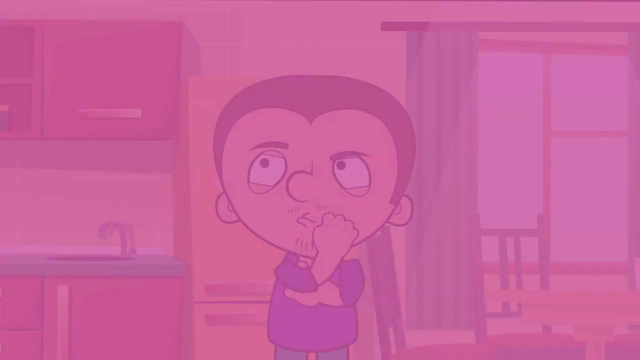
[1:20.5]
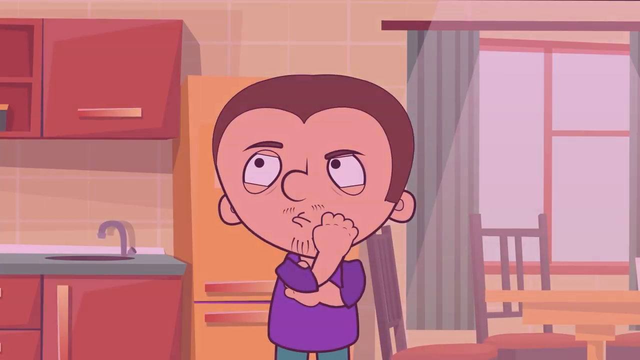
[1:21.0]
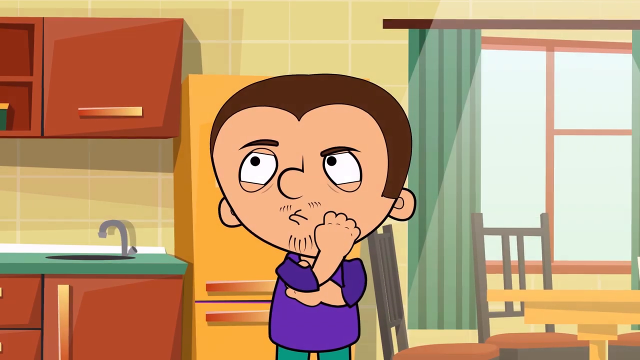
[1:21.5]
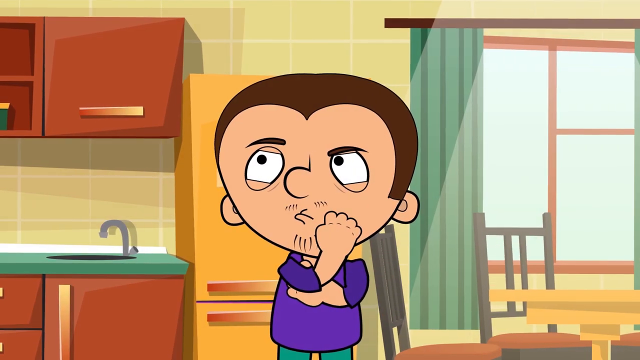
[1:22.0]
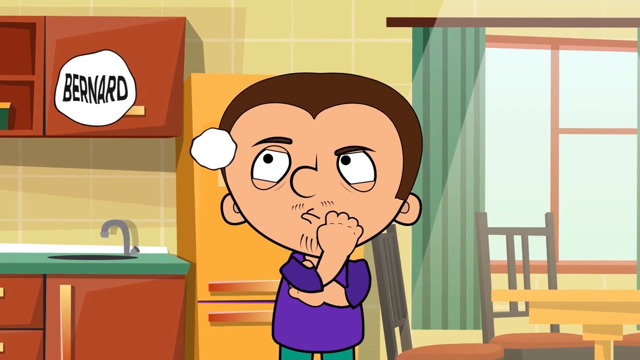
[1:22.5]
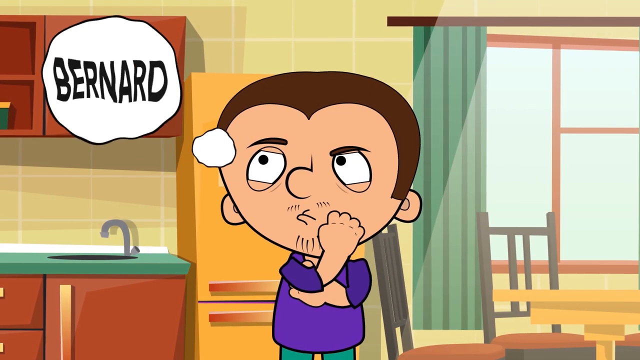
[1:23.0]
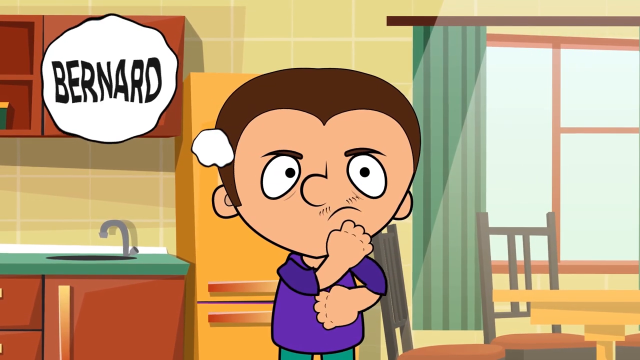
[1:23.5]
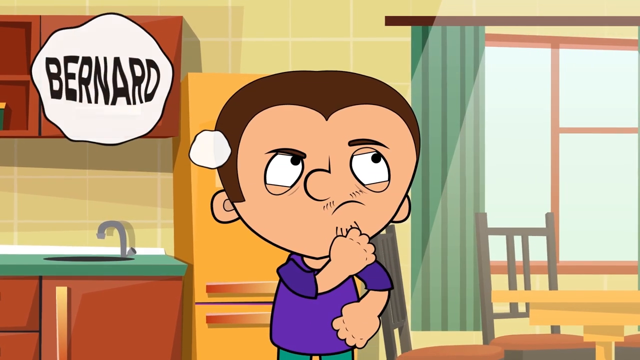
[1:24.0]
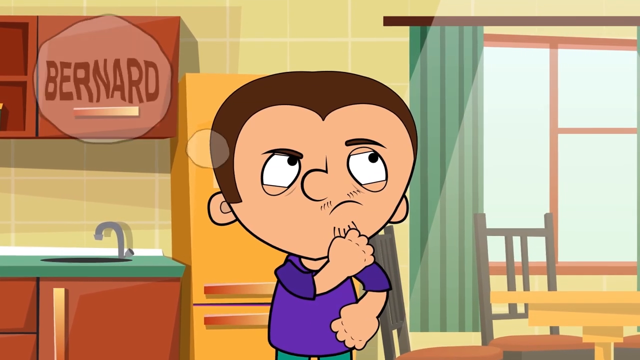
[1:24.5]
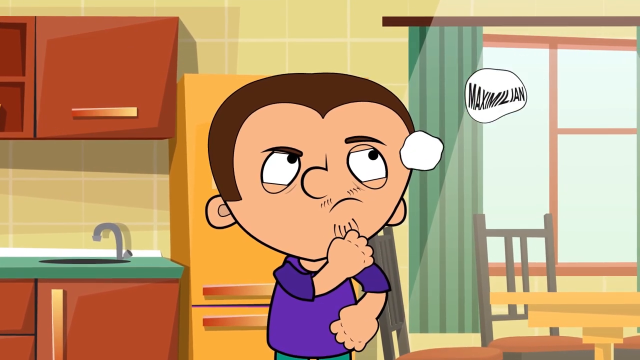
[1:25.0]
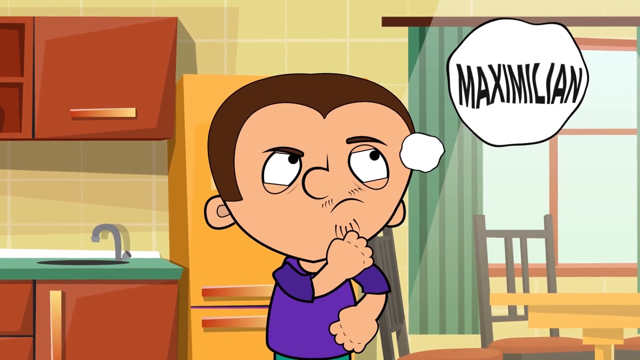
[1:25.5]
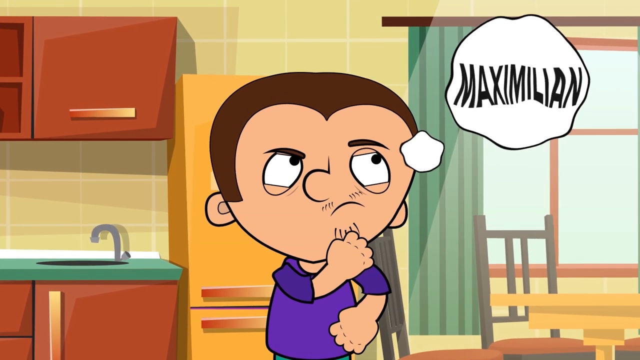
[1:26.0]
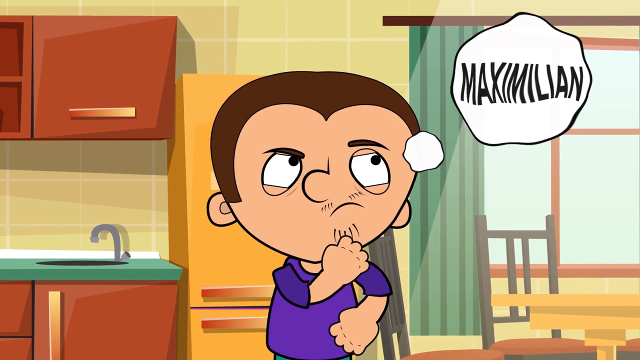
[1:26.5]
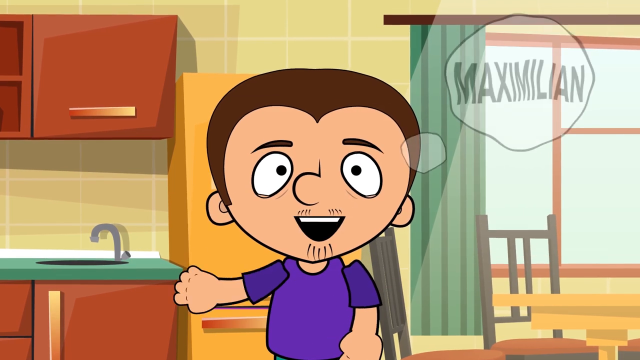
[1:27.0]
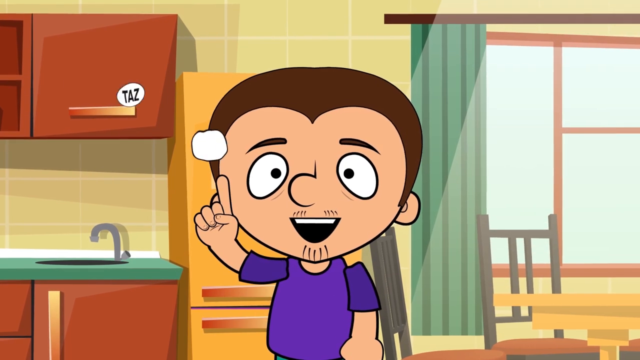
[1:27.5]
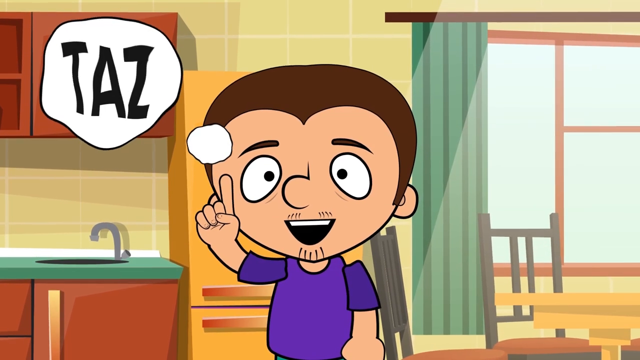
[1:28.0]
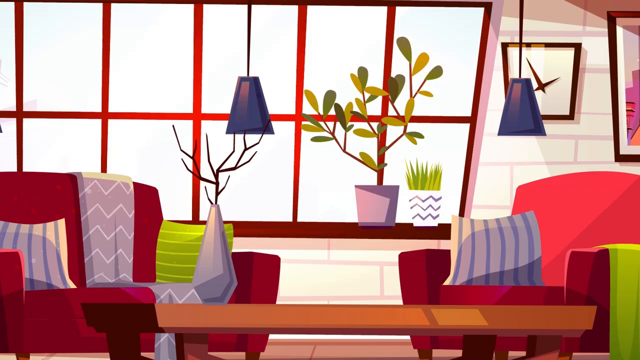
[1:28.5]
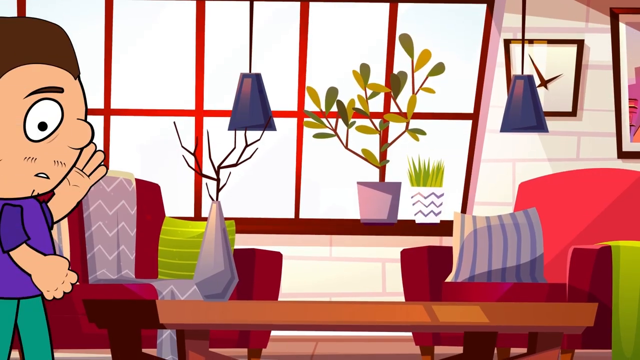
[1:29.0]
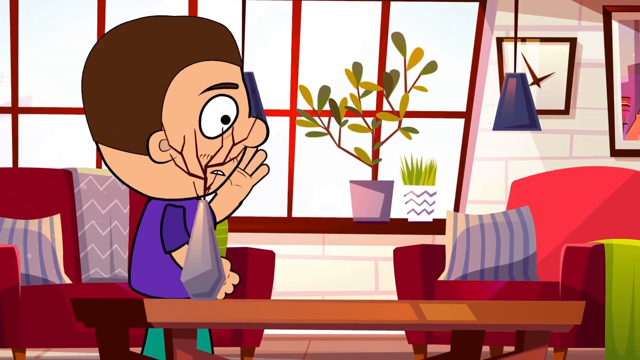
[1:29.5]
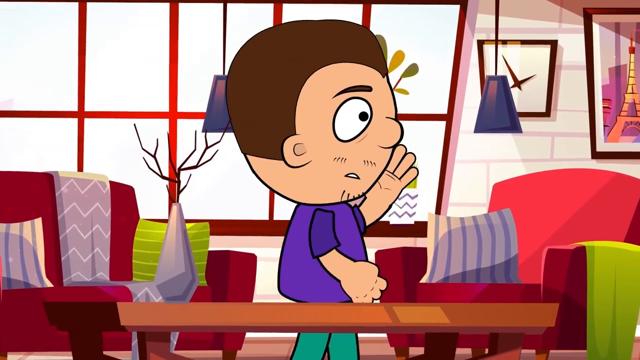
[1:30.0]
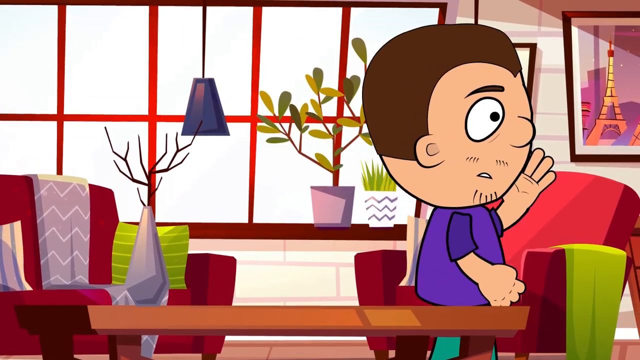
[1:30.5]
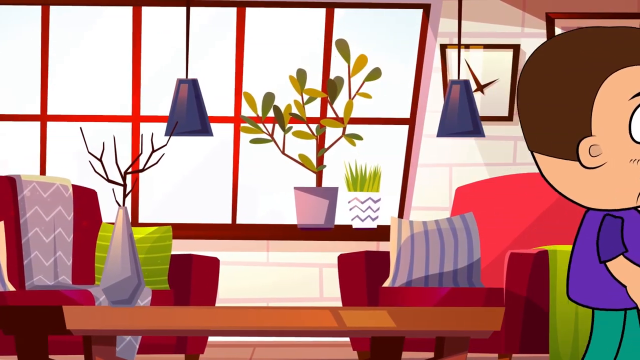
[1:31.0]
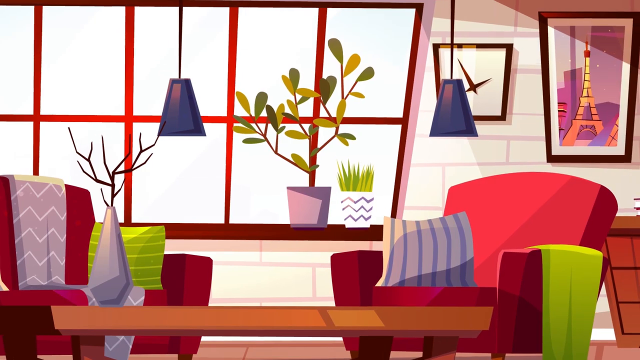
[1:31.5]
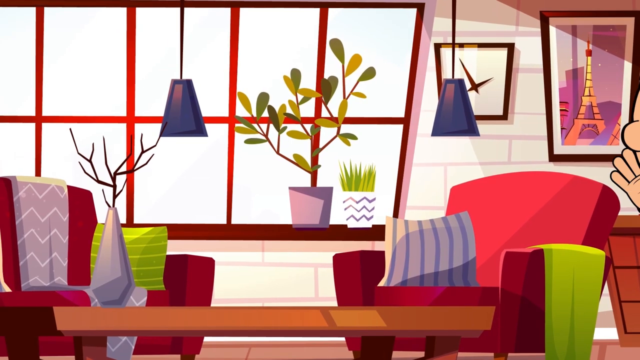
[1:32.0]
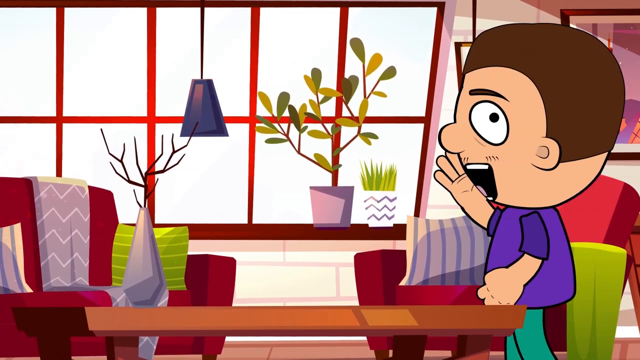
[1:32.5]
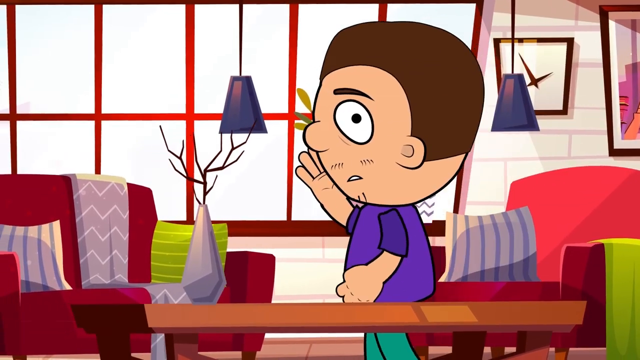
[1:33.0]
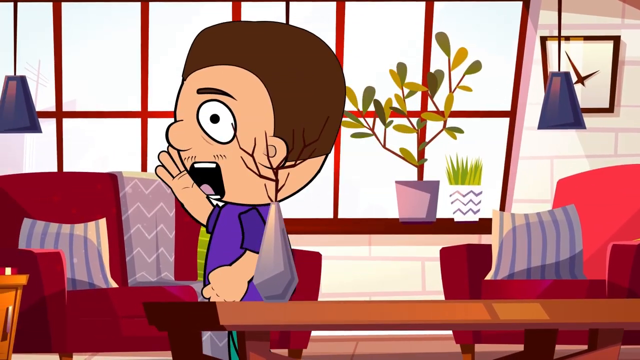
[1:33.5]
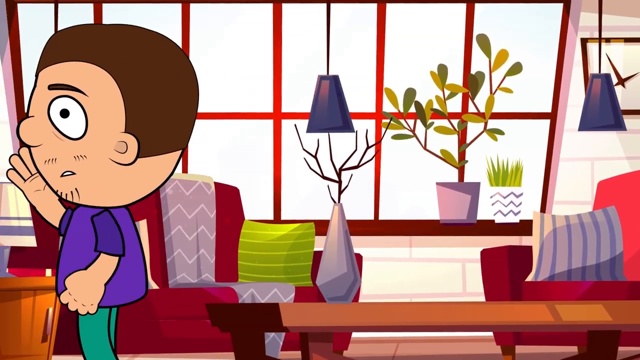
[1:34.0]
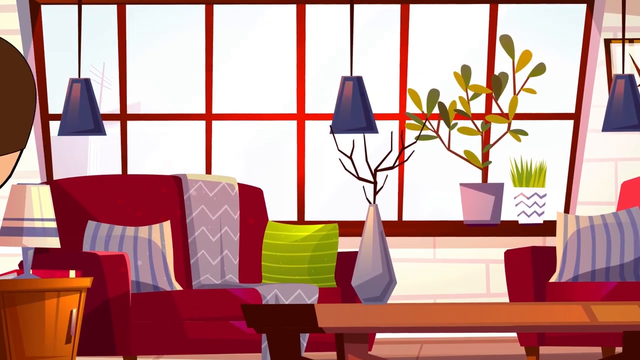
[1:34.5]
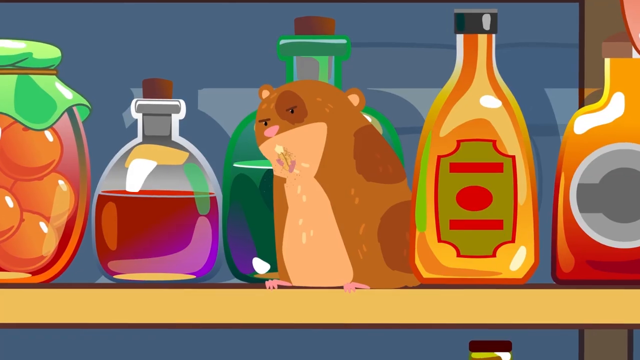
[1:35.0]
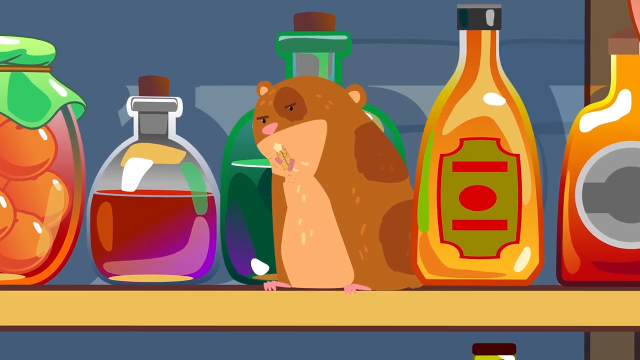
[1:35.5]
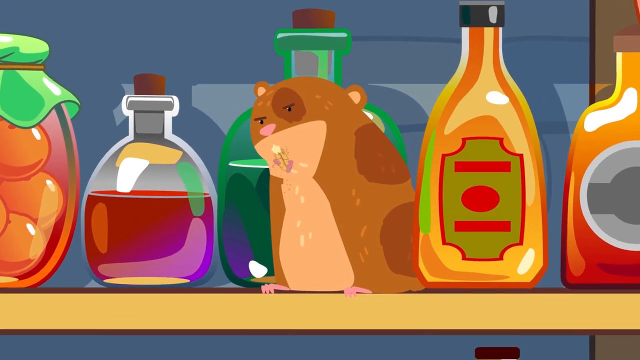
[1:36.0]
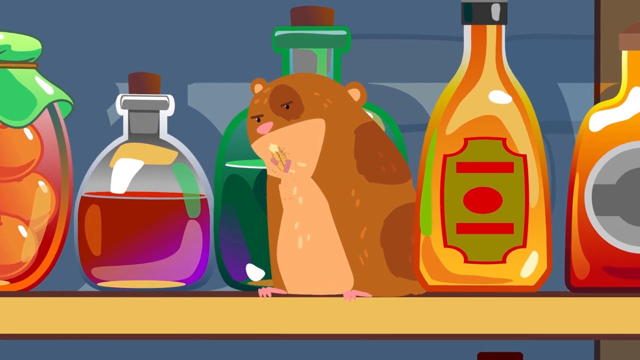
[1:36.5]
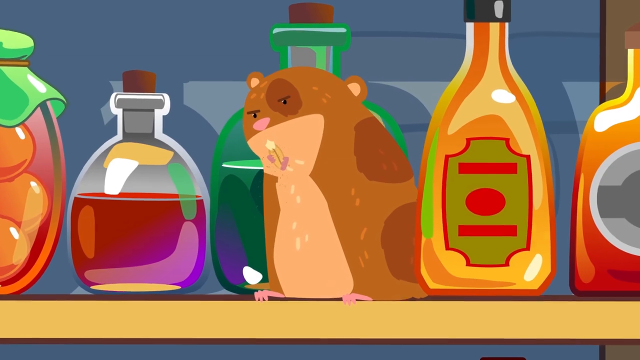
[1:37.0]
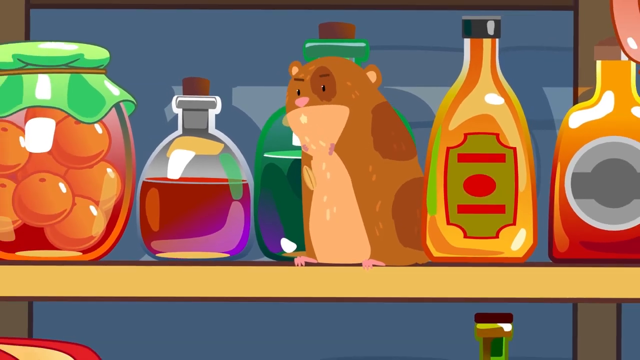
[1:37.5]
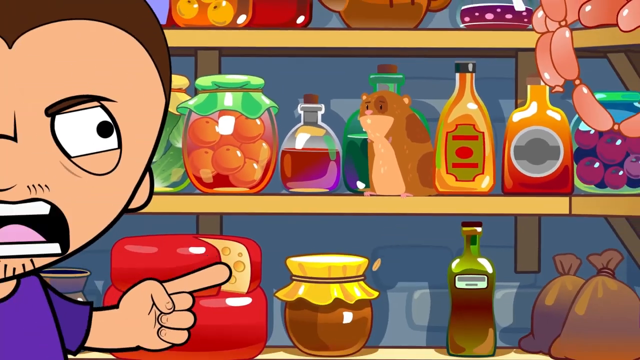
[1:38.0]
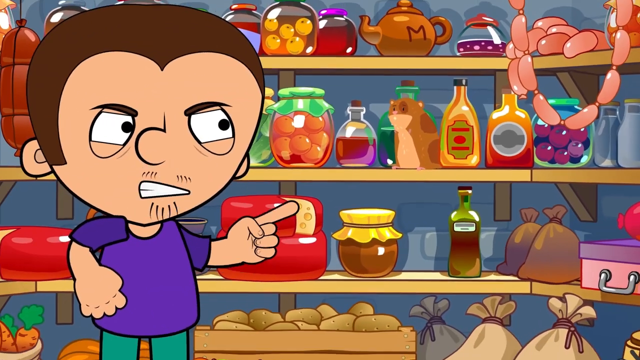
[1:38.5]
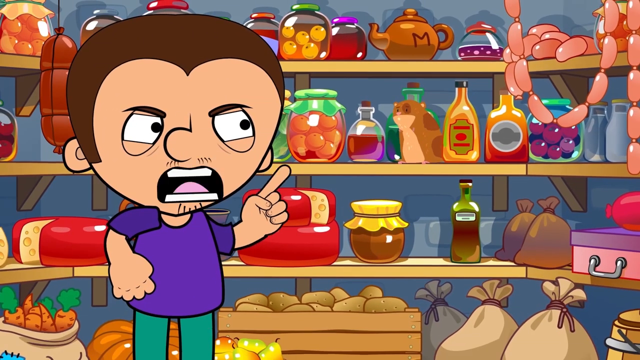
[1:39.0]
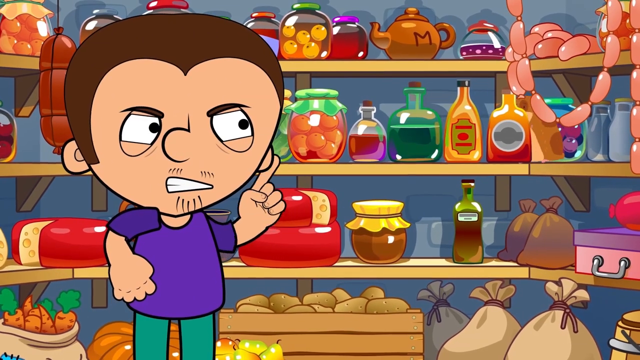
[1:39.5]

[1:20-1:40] The male character stands in his kitchen, contemplating something, his lips kind of pursed and his left arm crossing his body; his right arm is slightly over the left, facing upward, with his fist resting near his mouth. A thought bubble with the word "Bernard" appears on his left, then one with "Maximilian" on the right, then another with "Taz" on his left. He gets an idea and raises his right index finger. He walks through his living room, pacing back and forth and hollering as if to get someone's attention. Finally the hamster is found in the pantry, where it has been eating some of the food. The man becomes angry and shakes his finger at the hamster disapprovingly.